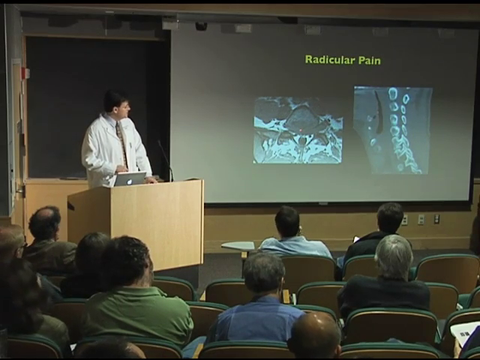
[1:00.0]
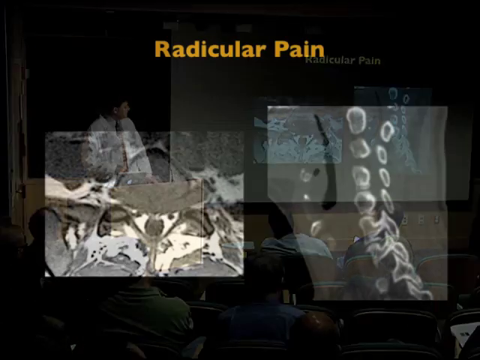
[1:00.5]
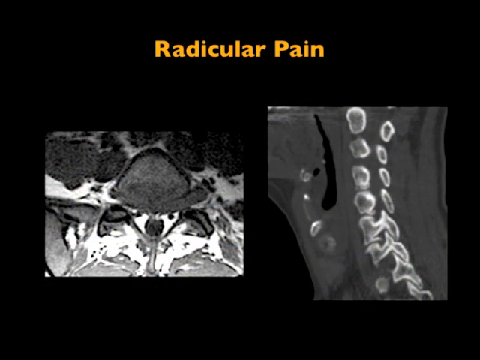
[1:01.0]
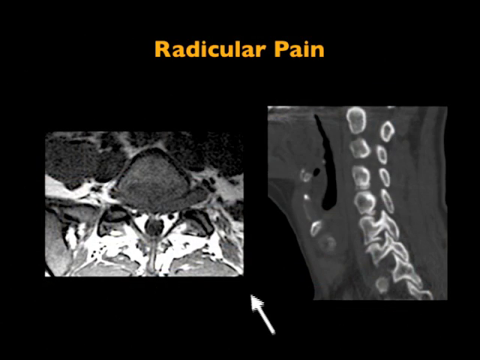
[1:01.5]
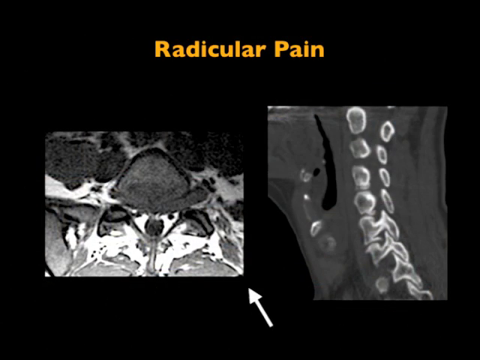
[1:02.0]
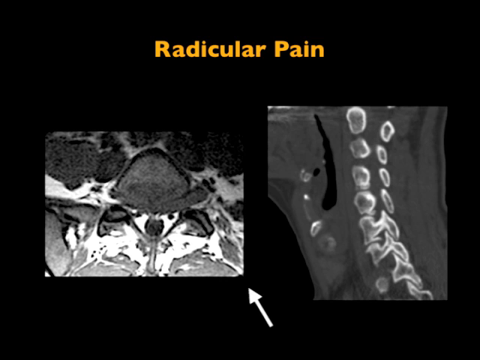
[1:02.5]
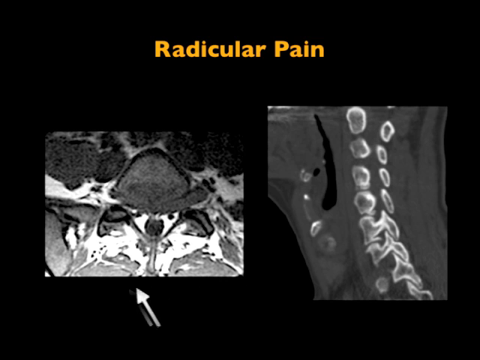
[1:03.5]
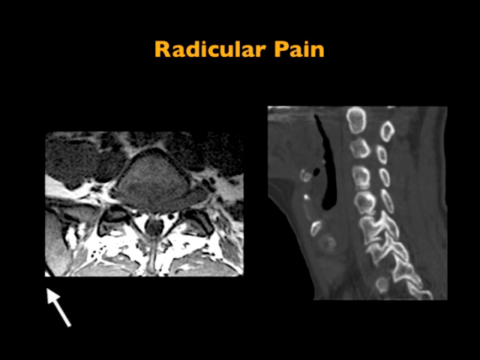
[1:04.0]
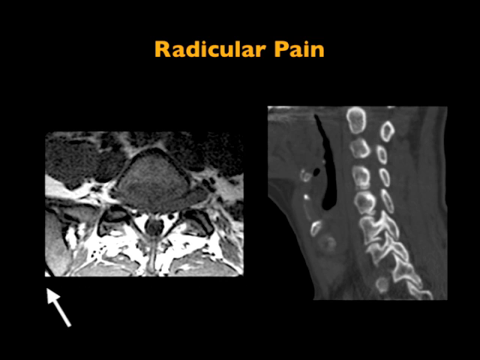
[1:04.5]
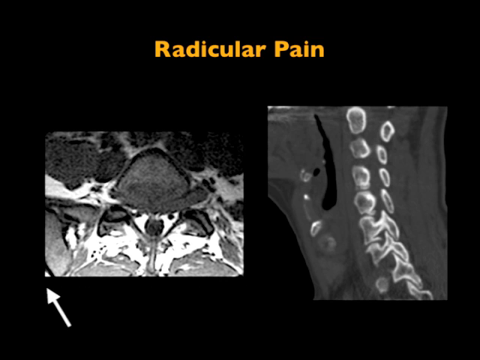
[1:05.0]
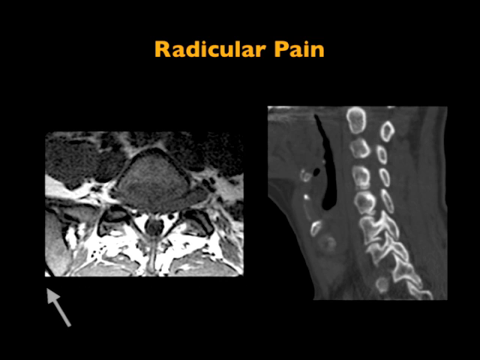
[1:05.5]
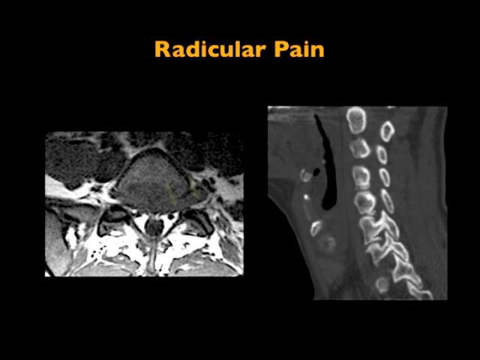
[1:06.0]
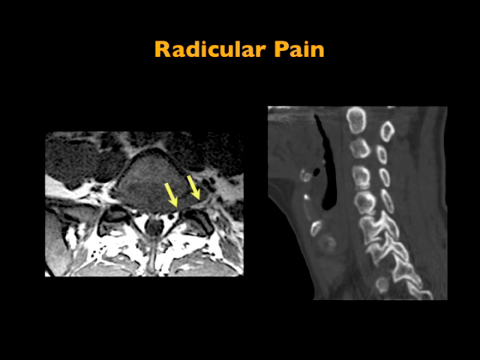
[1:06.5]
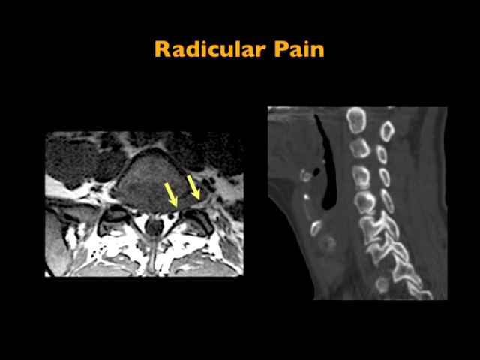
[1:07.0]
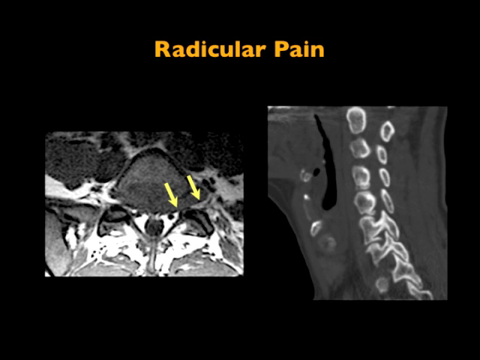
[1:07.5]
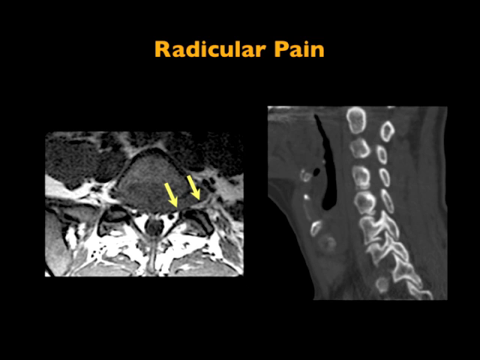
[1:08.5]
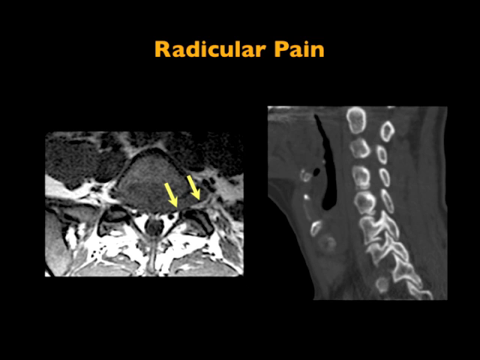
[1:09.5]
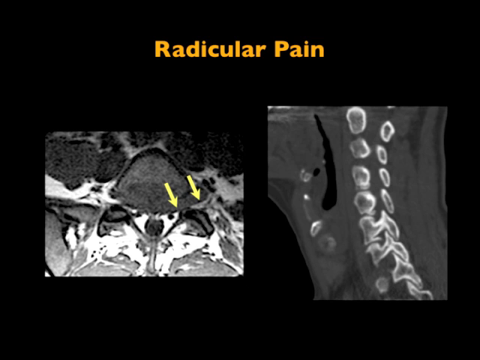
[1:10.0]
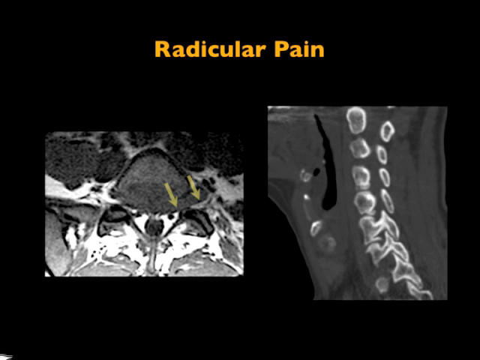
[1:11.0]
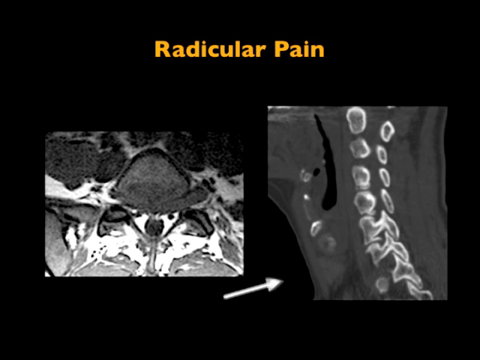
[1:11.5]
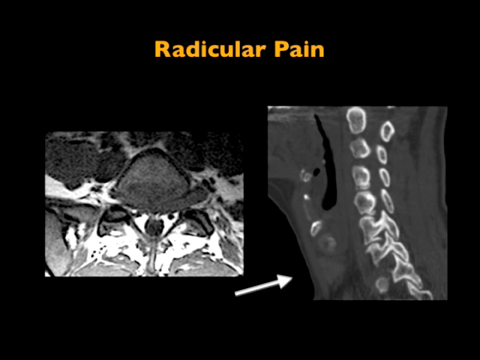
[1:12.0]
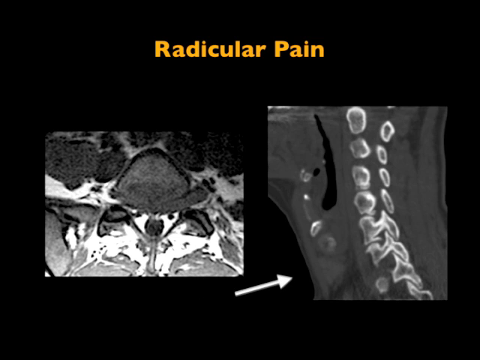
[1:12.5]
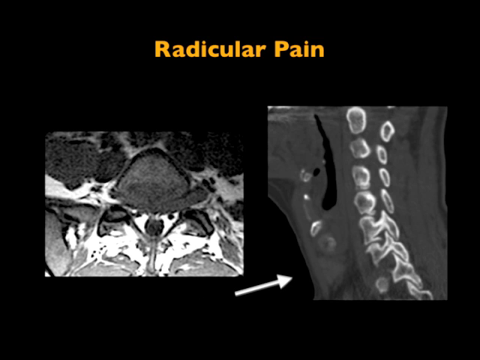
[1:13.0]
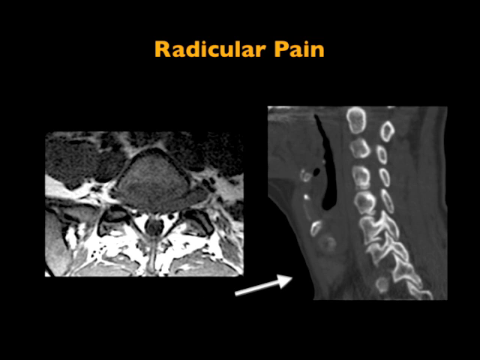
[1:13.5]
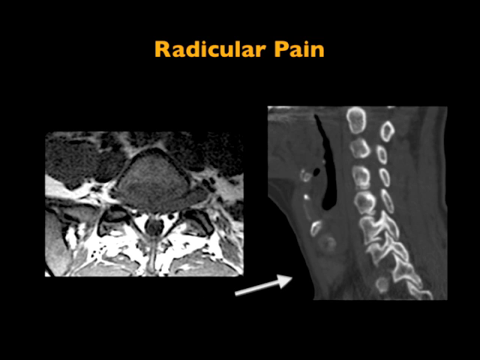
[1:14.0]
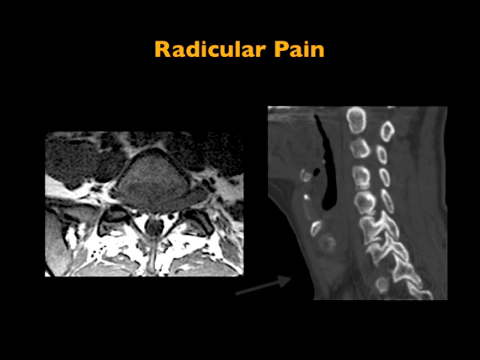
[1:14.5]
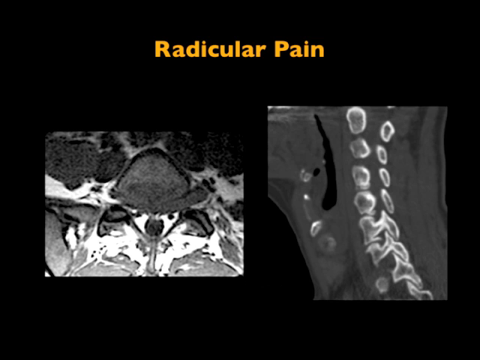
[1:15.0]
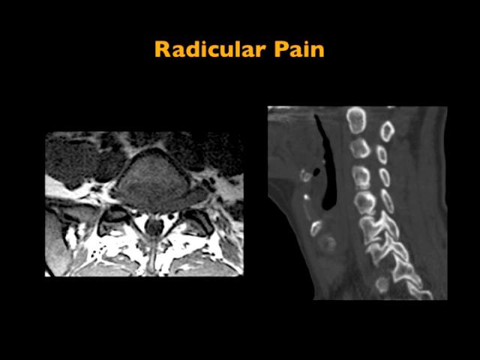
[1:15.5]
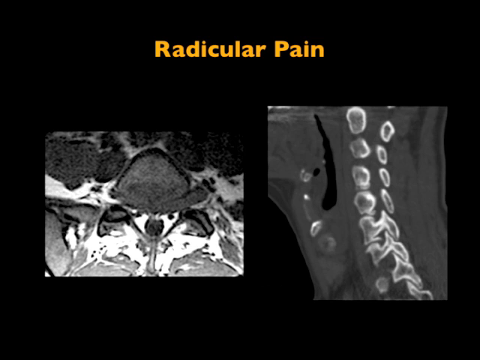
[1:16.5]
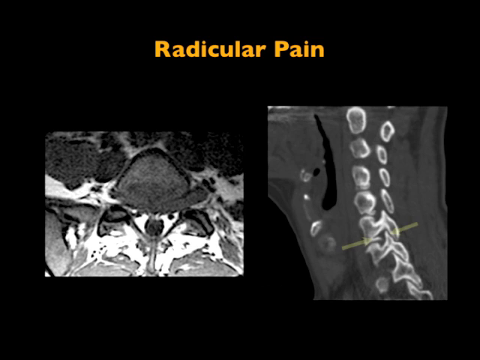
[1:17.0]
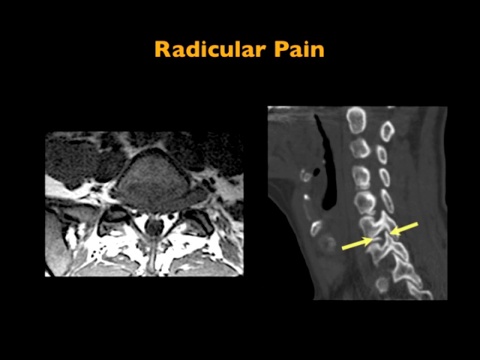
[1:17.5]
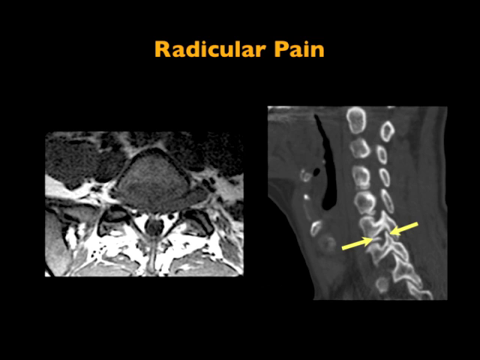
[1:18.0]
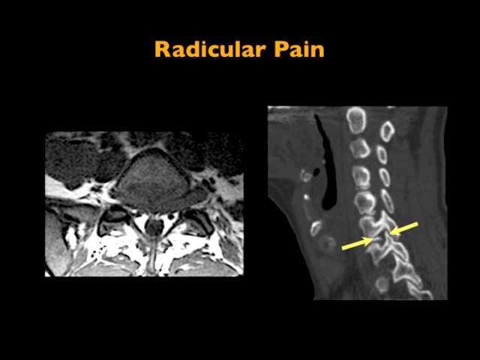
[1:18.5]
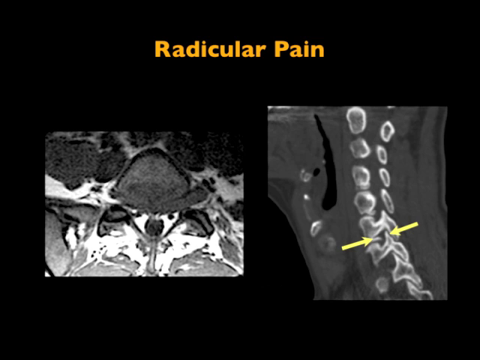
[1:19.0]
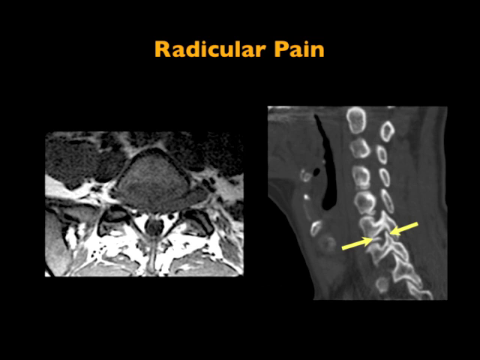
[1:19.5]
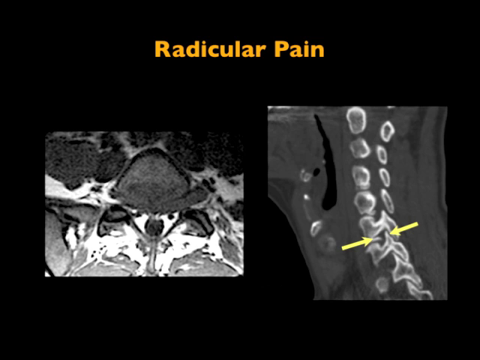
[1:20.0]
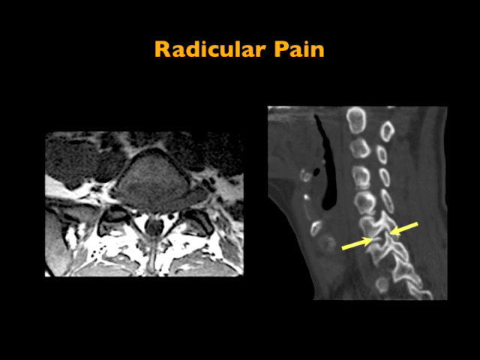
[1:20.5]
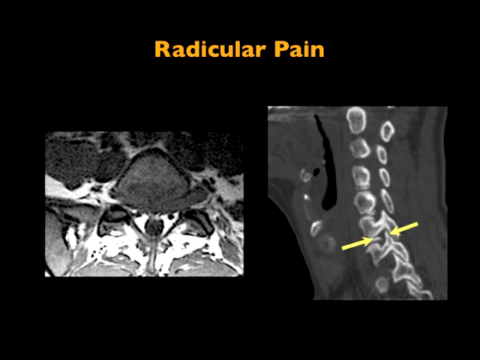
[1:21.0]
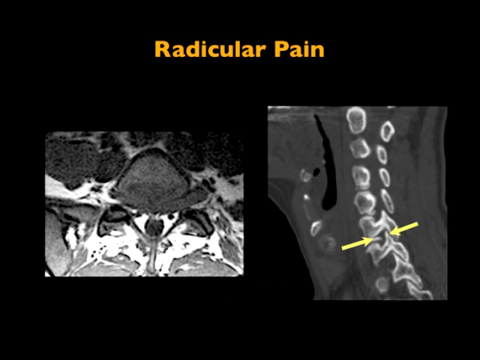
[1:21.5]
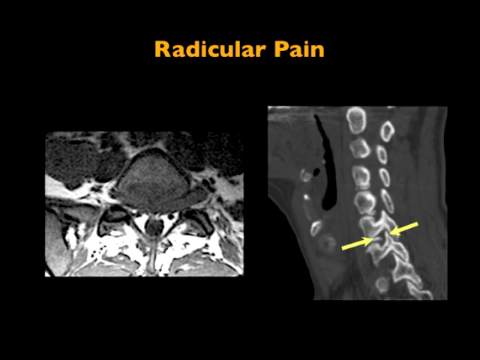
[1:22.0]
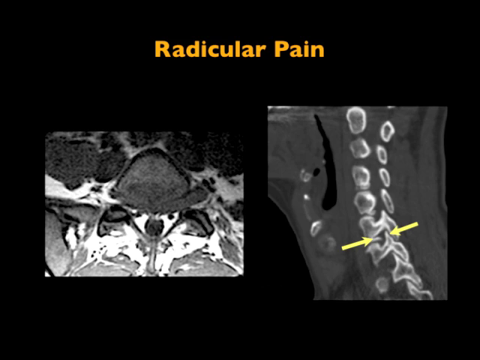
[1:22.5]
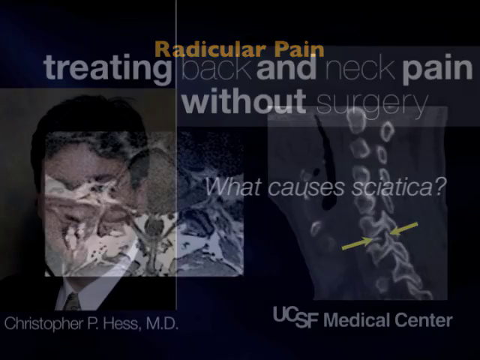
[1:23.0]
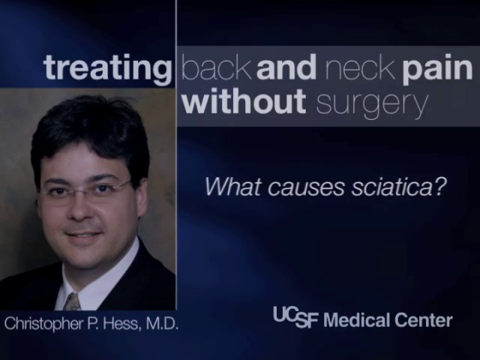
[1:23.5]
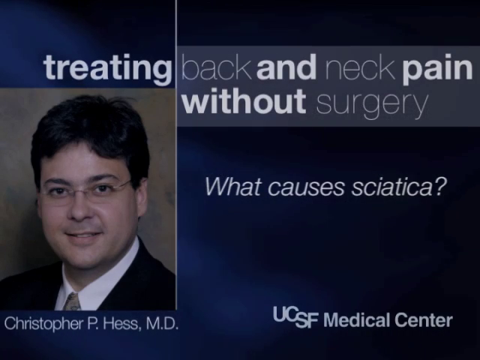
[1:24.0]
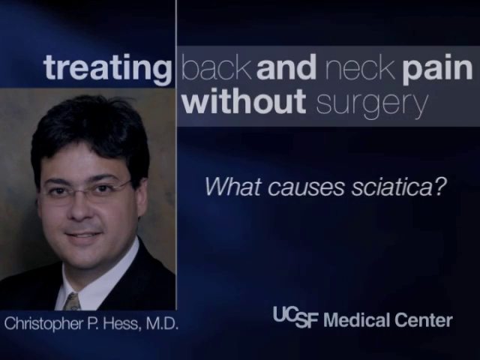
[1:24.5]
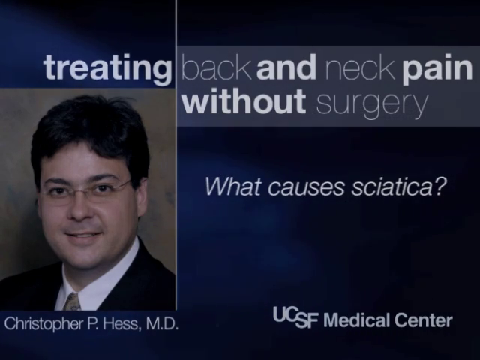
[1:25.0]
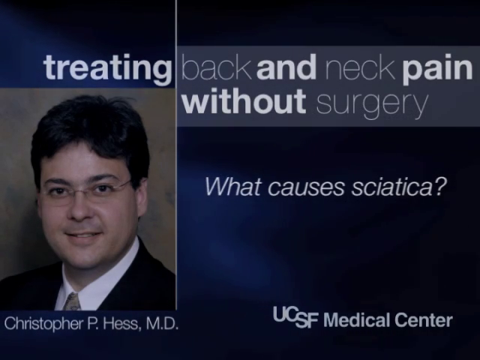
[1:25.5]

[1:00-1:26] Dr. Christopher P. Hess speaks in front of an audience, standing behind a podium and speaking into a microphone. He is a heavy-set man with short black hair and glasses, wearing a white lab coat, a gray button-up shirt, and a gold-and-black striped necktie. To his right is a screen that says "radicular pain" at the top and shows two black and white medical images of spots with radicular pain, which appear to be of a spine. A white arrow points out spots on the left image, then two yellow arrows point out spots on the same image. A white arrow then points out a spot on the right image, followed by two yellow arrows doing the same. The video cuts to a portrait shot of Dr. Christopher P. Hess, standing and wearing a black suit, a white button-up shirt, and a golden black striped tie. The caption at the top of the screen says "Treating back and neck pain without surgery. What causes sciatica?" A logo for the UCSF Medical Center is shown at the bottom of the screen.